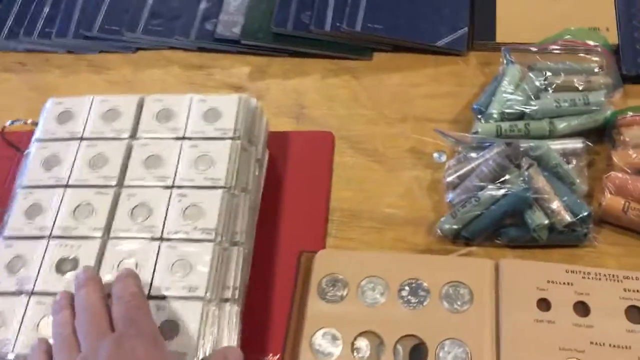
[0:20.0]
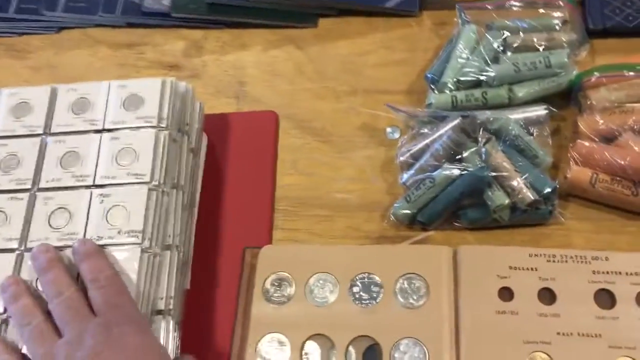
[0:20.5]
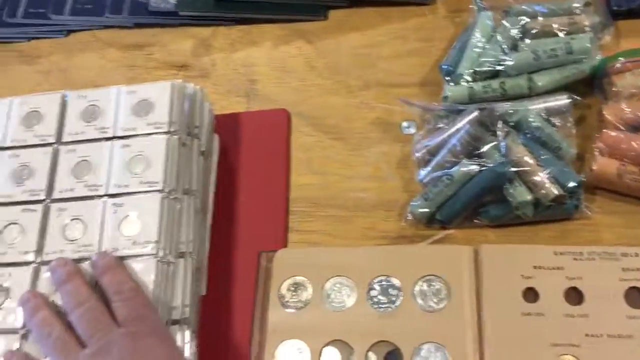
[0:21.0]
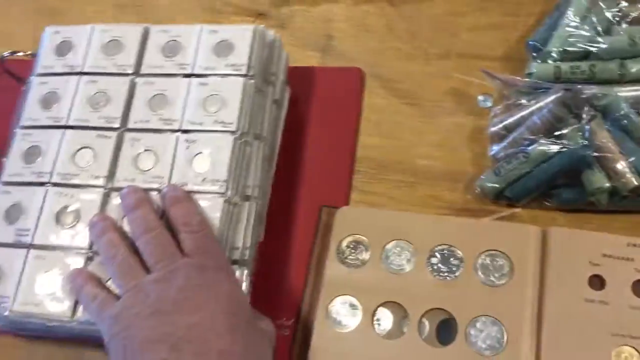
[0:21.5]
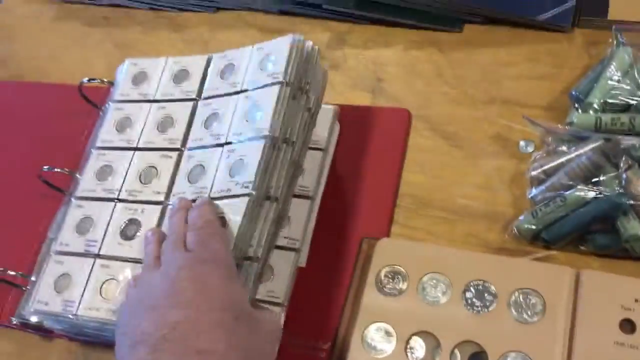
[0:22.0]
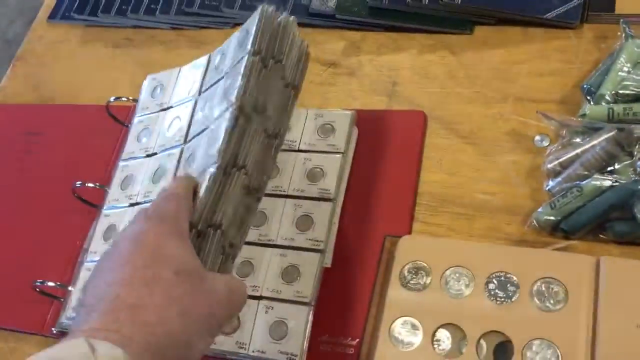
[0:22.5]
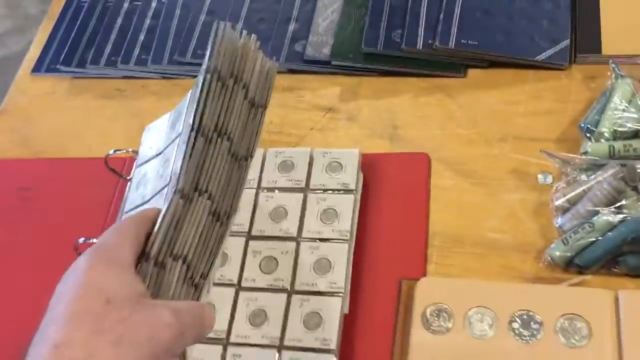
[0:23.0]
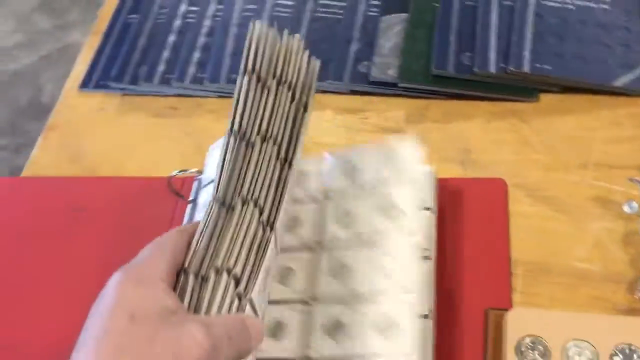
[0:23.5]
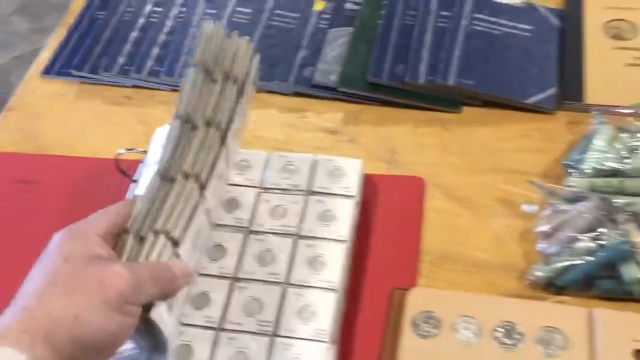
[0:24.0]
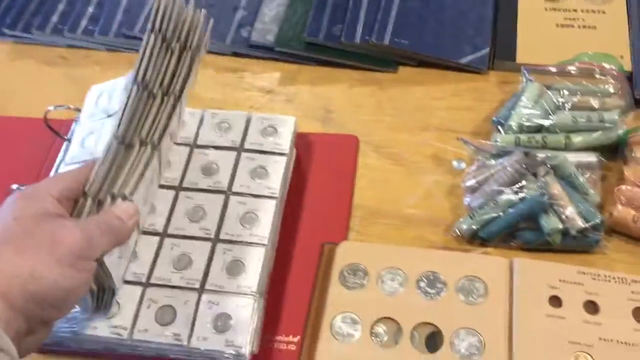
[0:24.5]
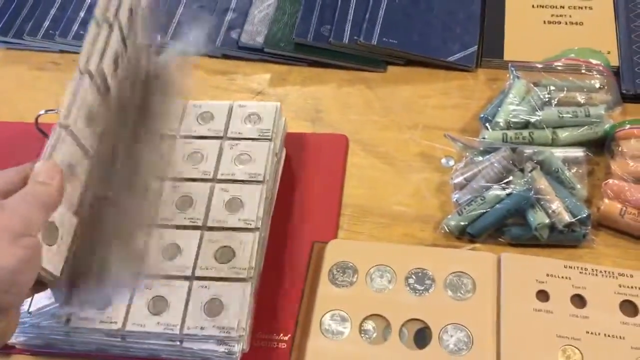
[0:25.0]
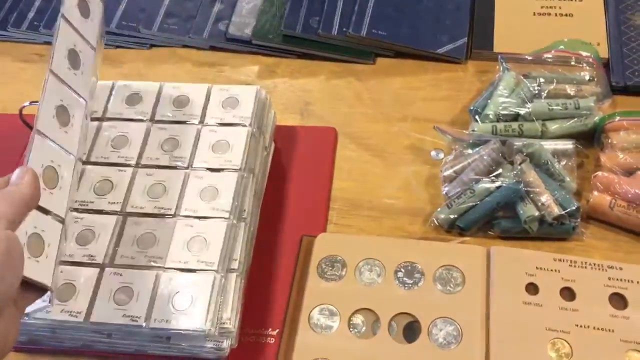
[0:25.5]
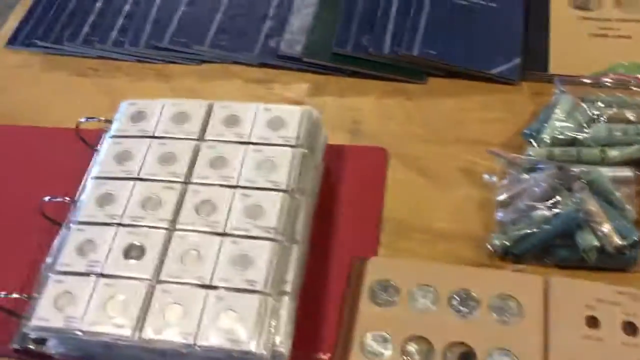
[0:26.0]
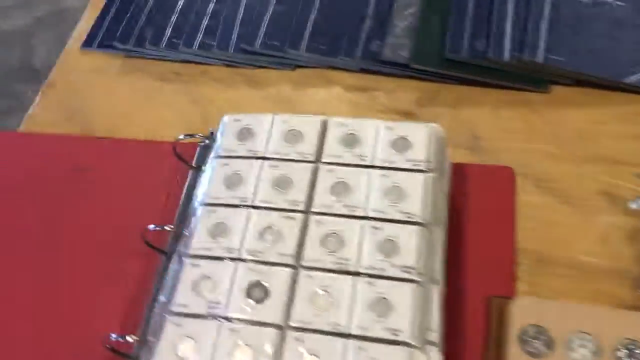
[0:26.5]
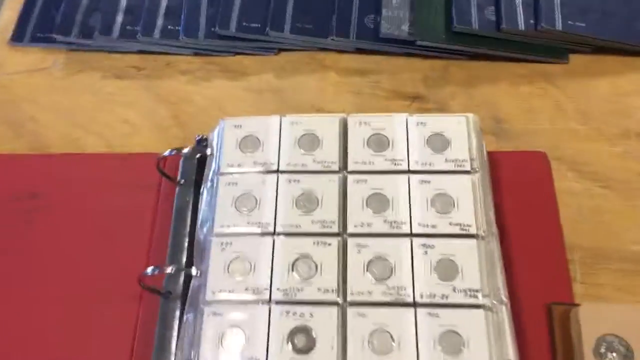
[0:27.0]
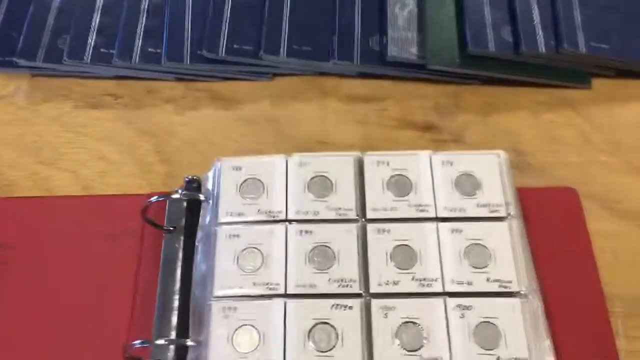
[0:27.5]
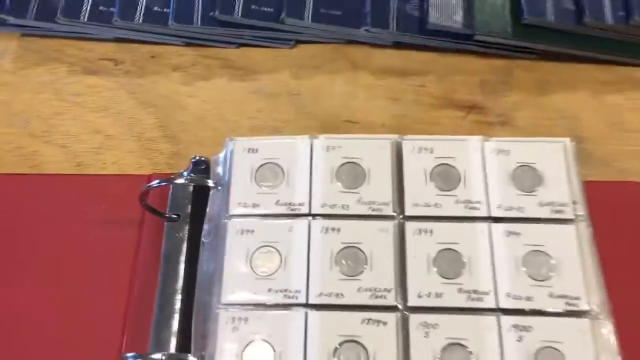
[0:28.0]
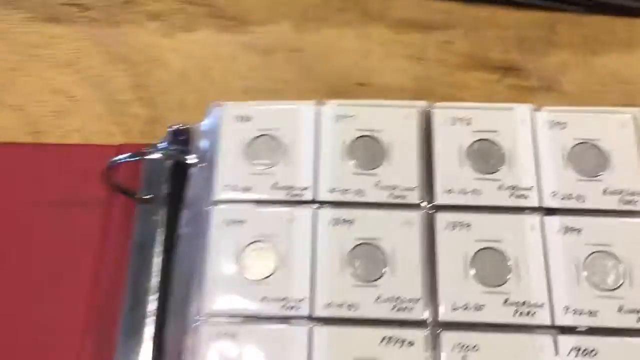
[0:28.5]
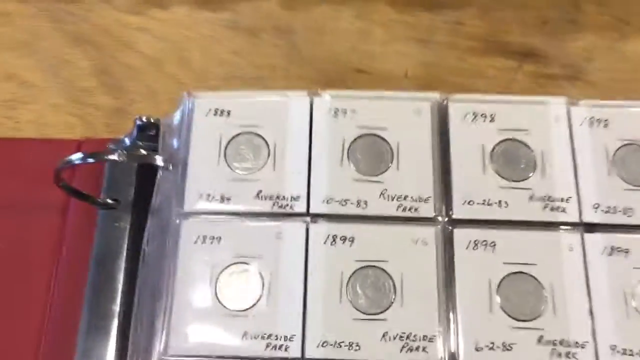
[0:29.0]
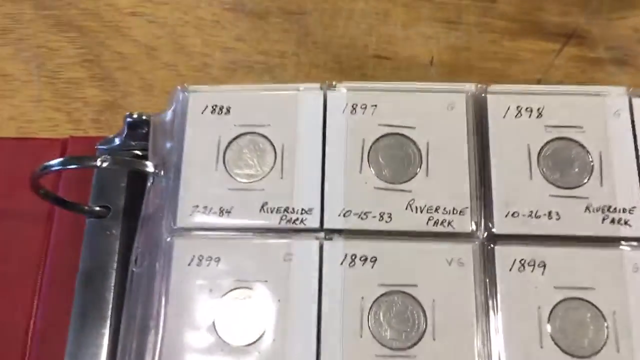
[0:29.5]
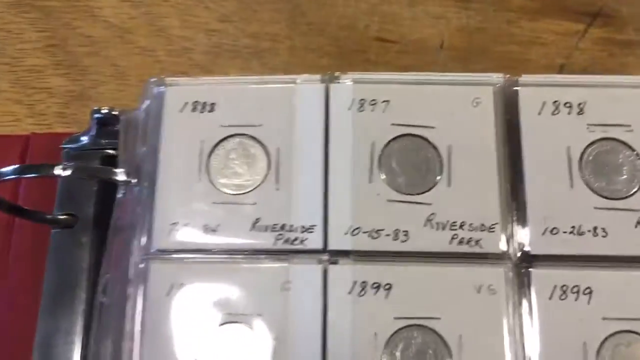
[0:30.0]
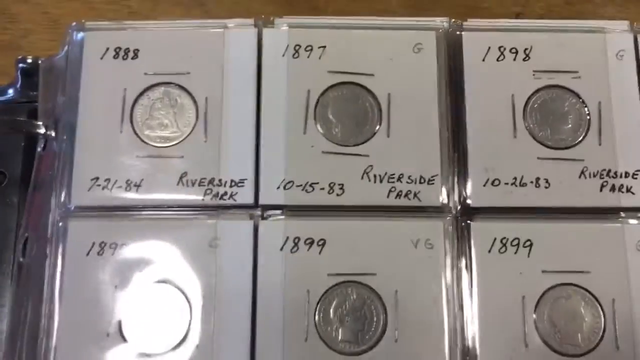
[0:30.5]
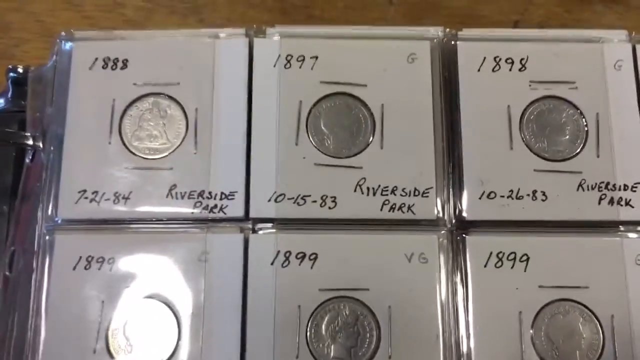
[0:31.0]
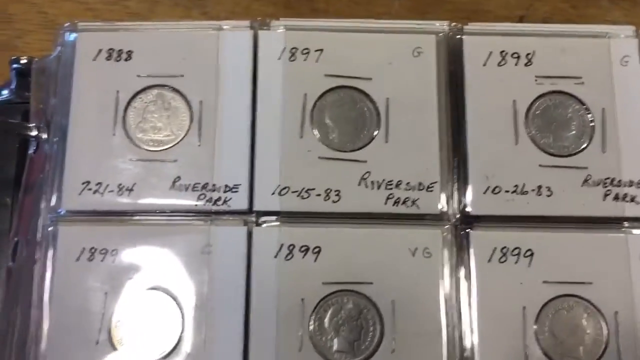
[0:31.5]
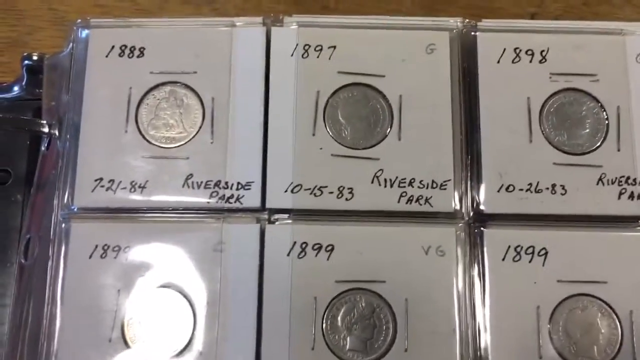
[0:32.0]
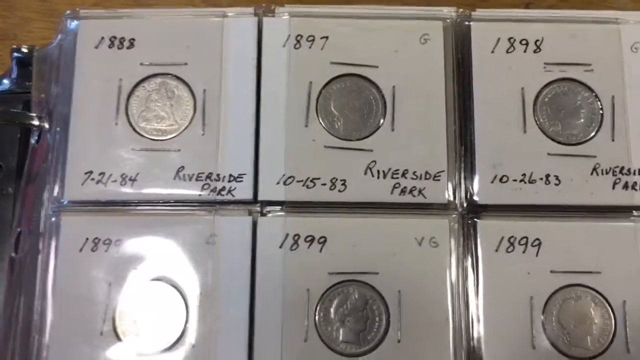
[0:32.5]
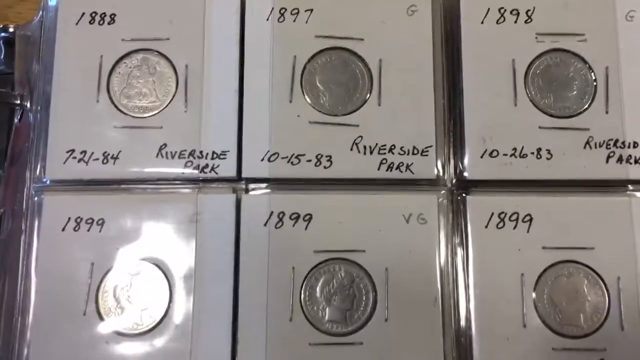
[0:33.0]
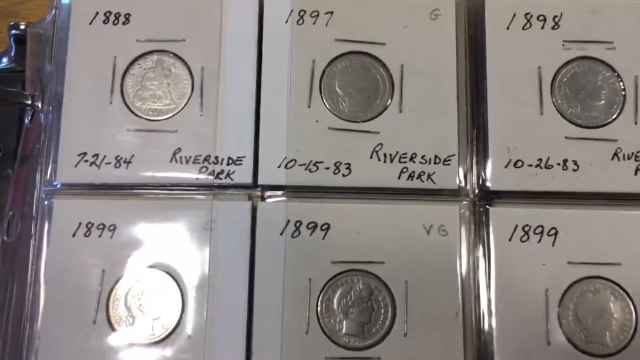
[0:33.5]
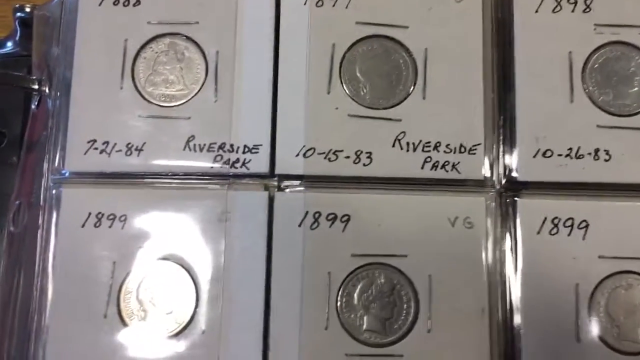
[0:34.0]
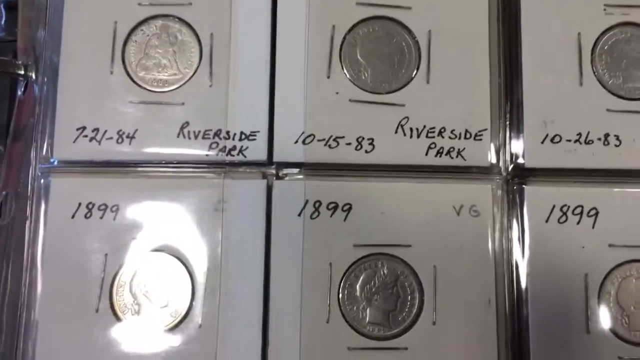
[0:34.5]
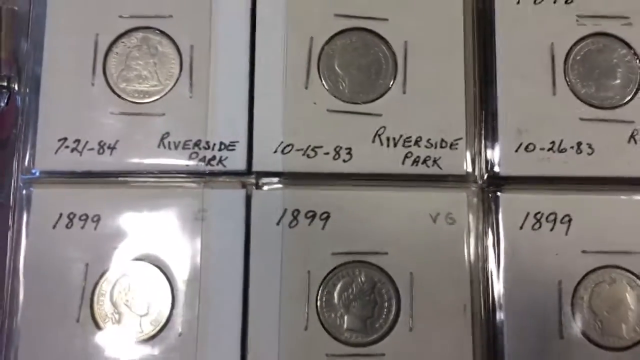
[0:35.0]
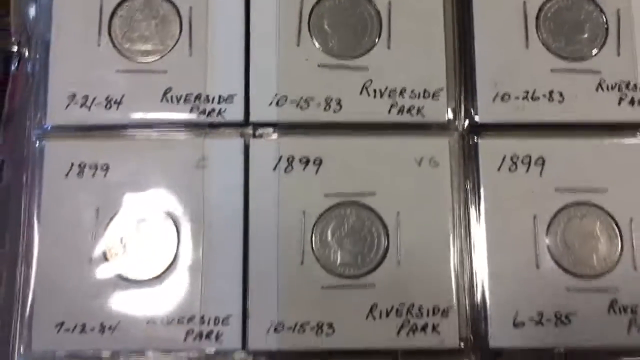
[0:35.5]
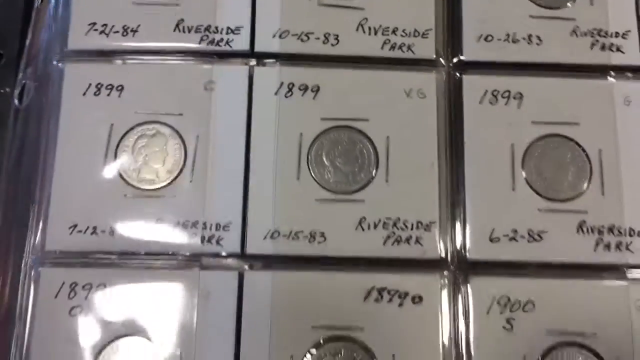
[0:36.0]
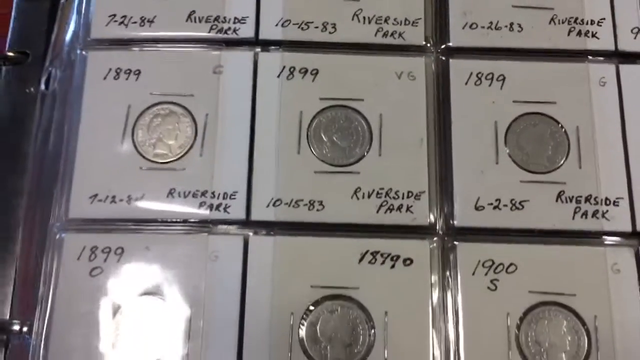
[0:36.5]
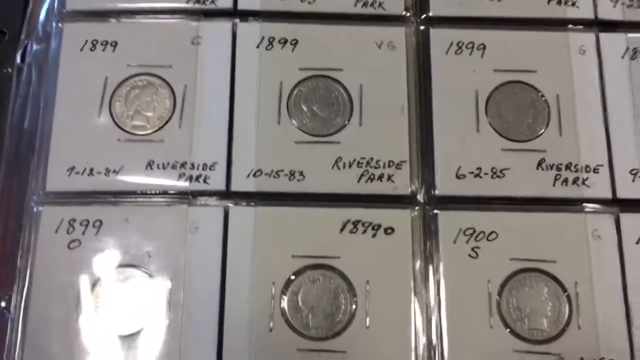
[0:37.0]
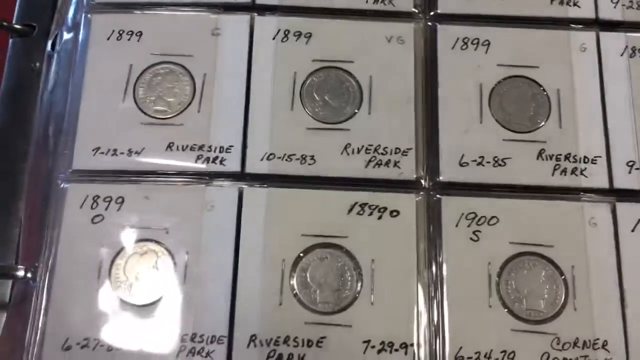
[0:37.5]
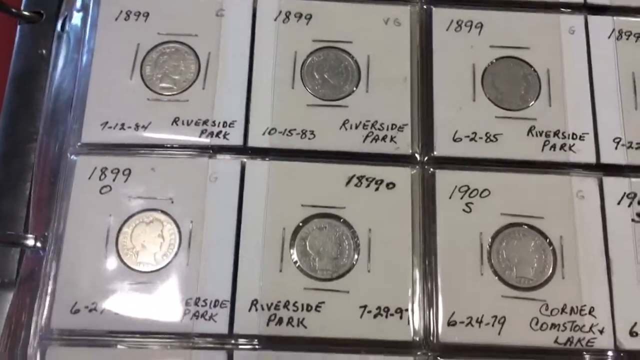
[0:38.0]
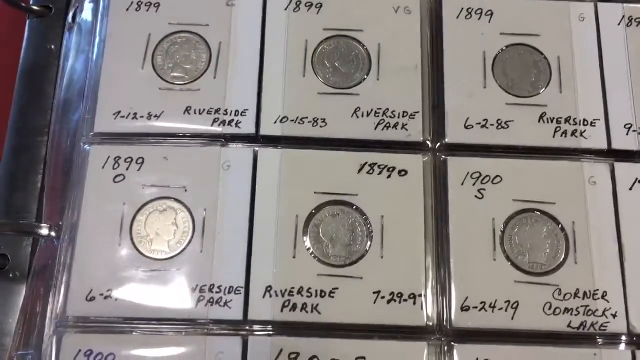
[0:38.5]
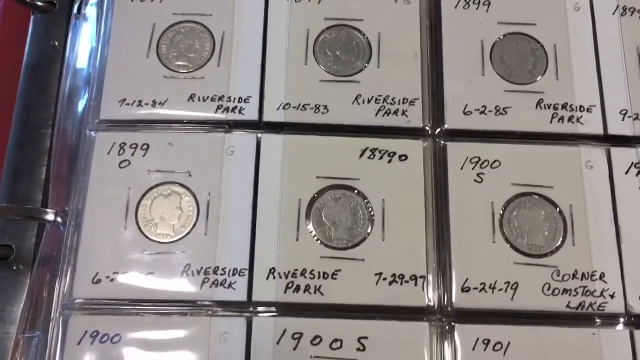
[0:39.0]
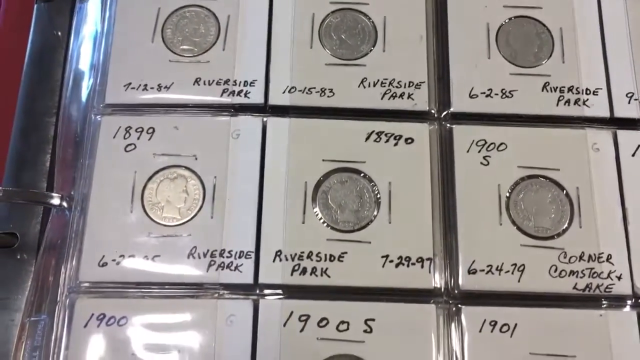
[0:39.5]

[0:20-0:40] There is a black table with a brown table on top of it. Items that looked like eyeshadow are clearly coins, with names written on them, so the files on the table hold different coins. Other items in plastic seem to be lipsticks in different colors. Most of the files are maroon, and some are green or powder blue. The items that seem to be lipstick are peach and powder blue. They are all on top of the table, too many to count. When the camera gets closer to the maroon file, its contents seem to be coins, but what exactly is in the maroon file and in the peach one is not clear.